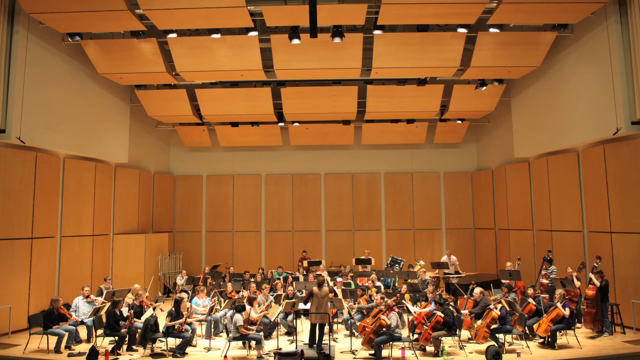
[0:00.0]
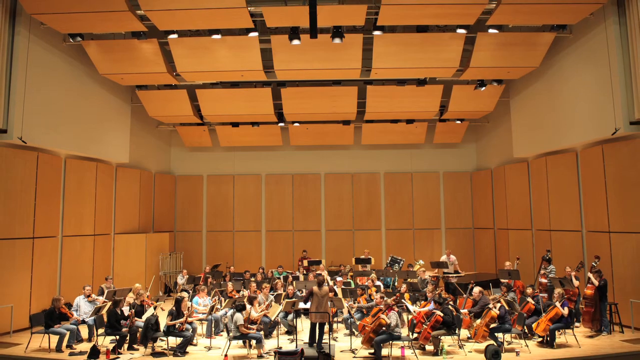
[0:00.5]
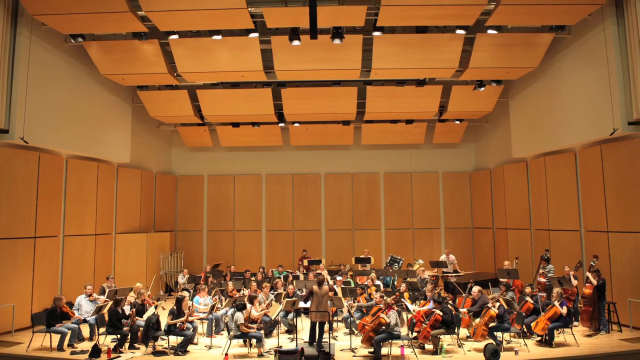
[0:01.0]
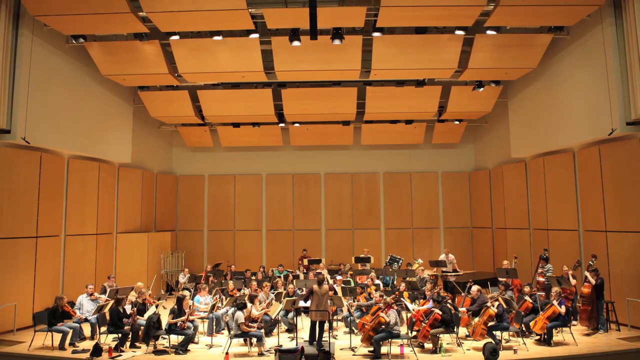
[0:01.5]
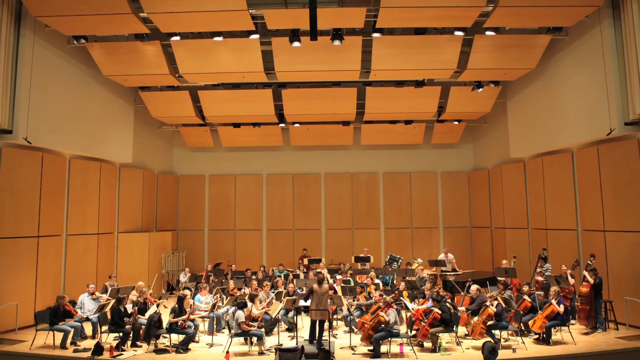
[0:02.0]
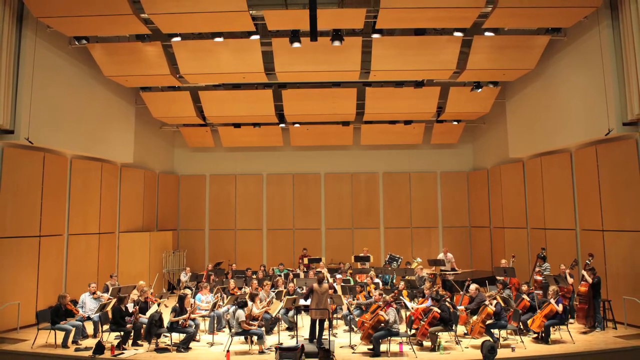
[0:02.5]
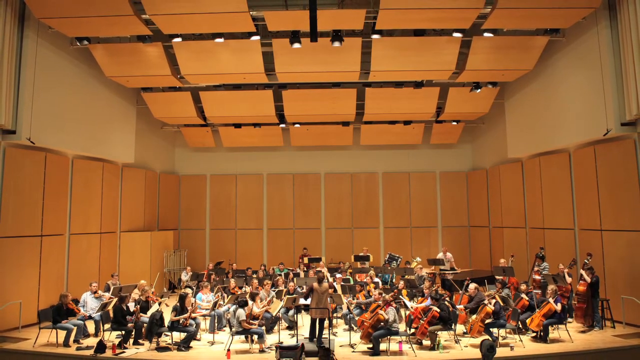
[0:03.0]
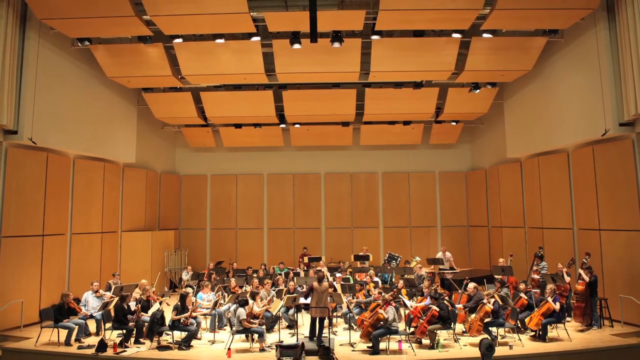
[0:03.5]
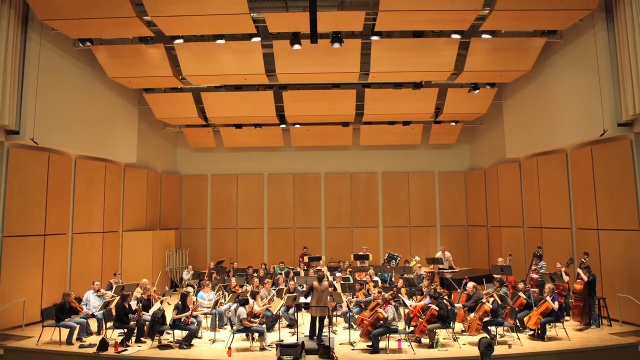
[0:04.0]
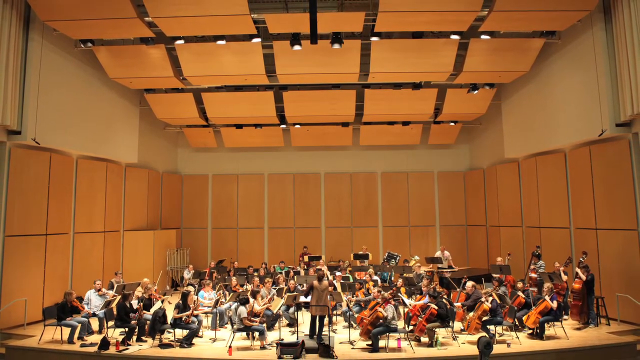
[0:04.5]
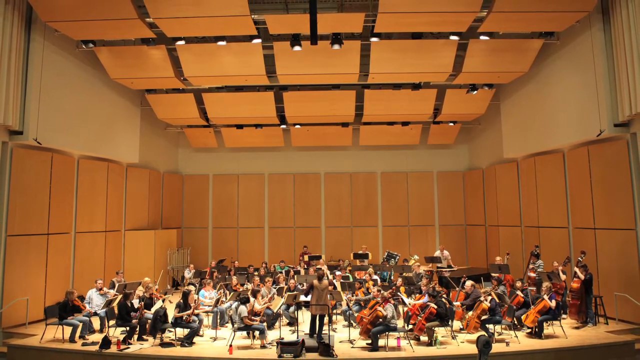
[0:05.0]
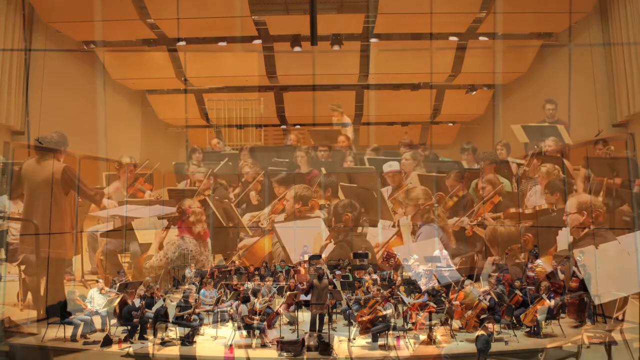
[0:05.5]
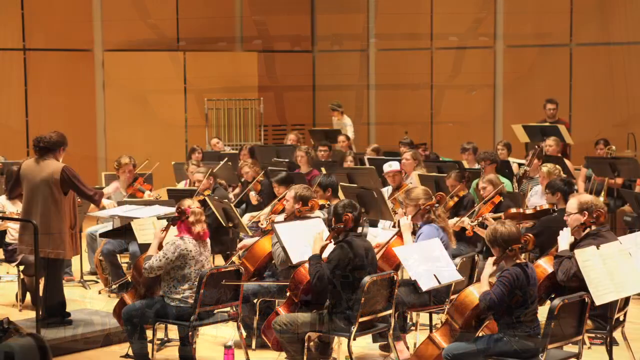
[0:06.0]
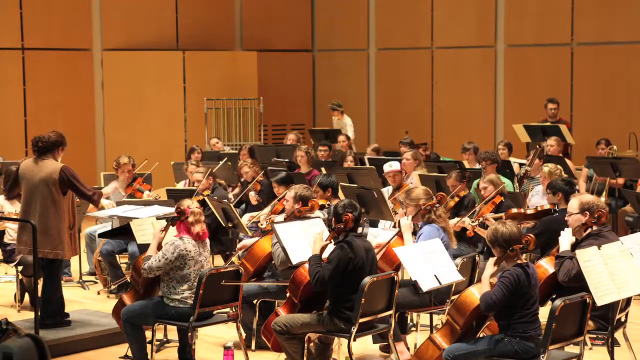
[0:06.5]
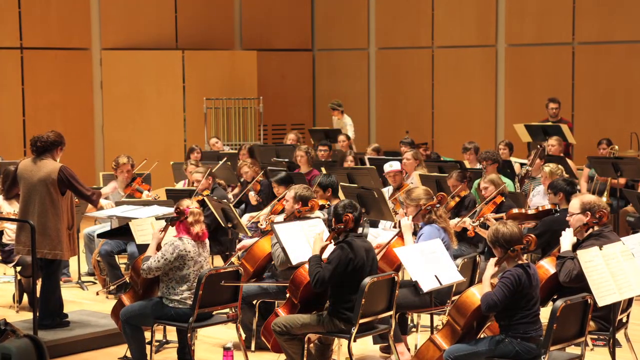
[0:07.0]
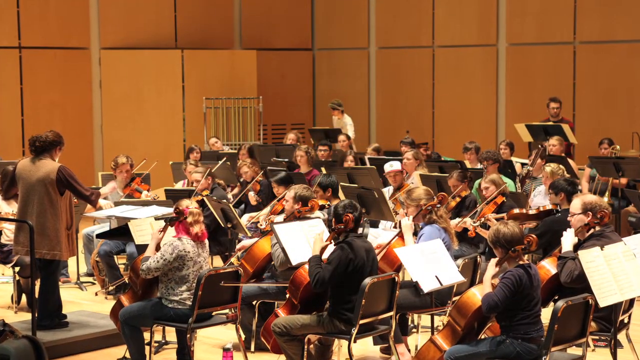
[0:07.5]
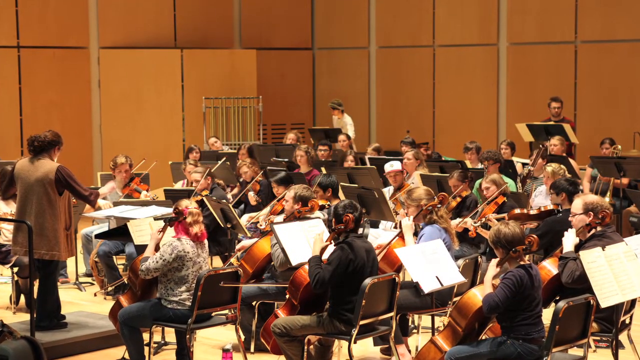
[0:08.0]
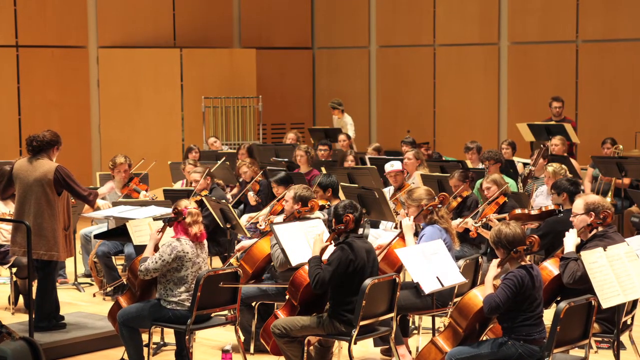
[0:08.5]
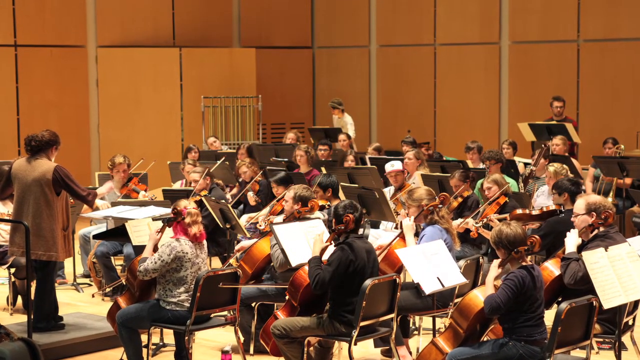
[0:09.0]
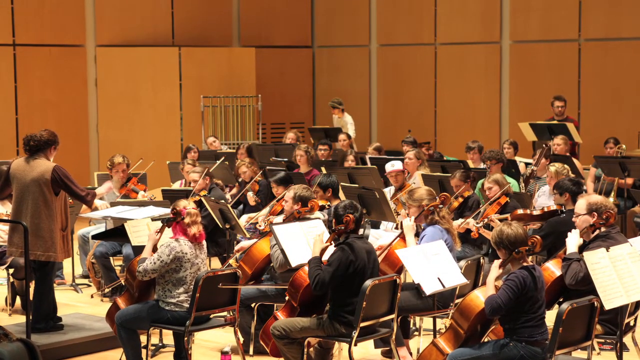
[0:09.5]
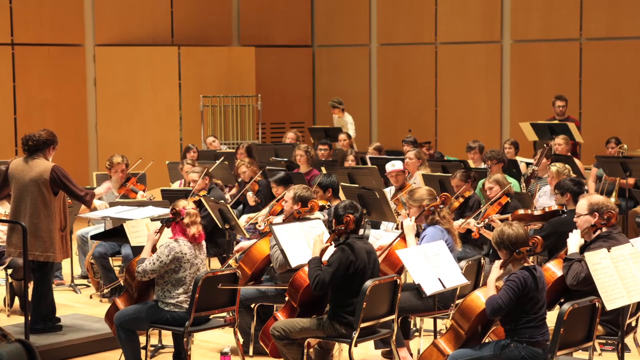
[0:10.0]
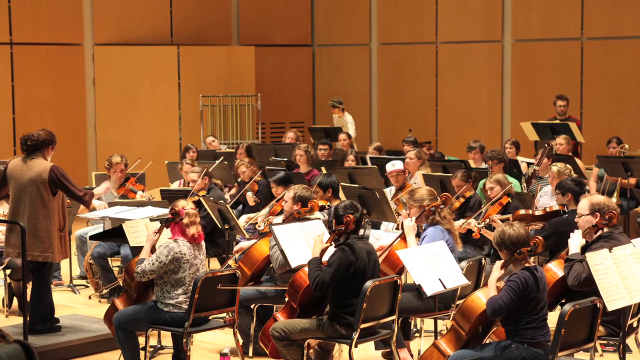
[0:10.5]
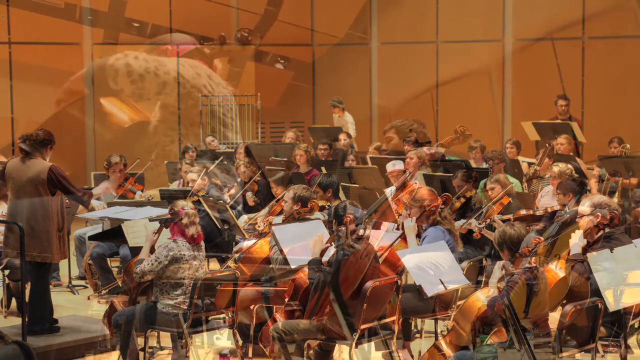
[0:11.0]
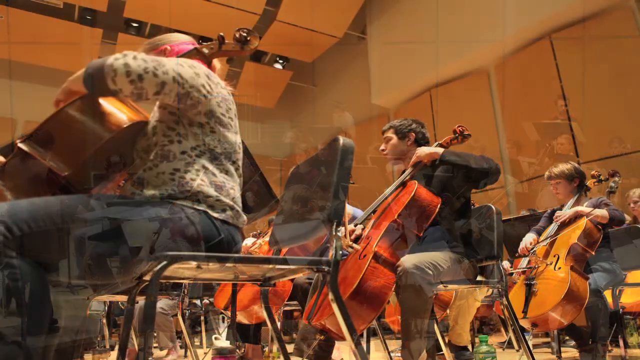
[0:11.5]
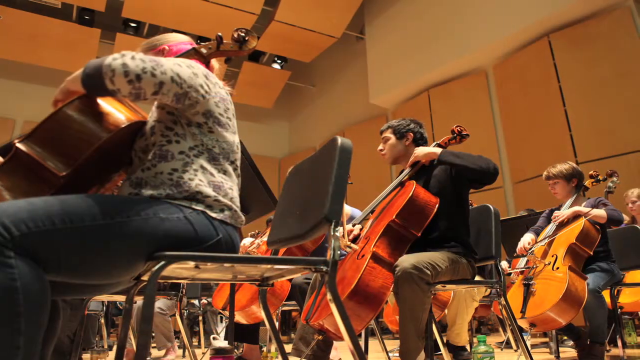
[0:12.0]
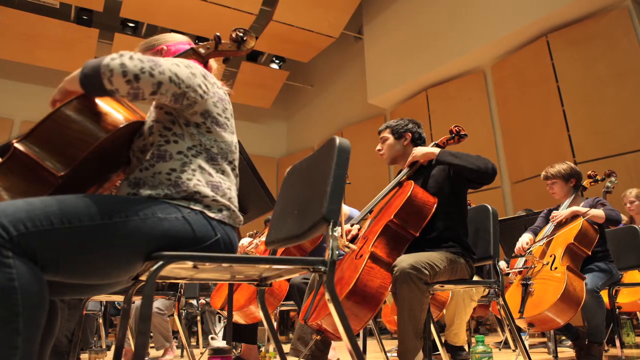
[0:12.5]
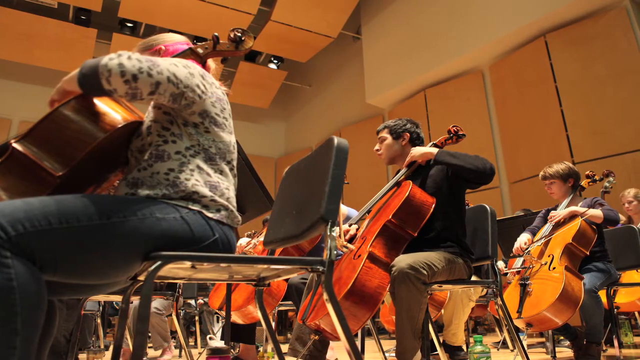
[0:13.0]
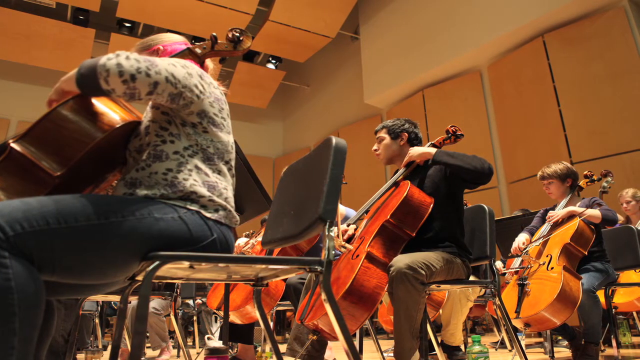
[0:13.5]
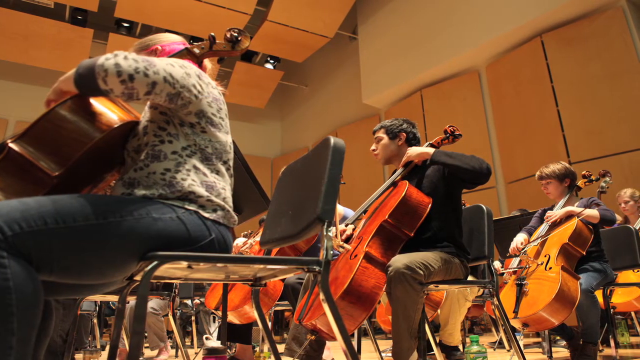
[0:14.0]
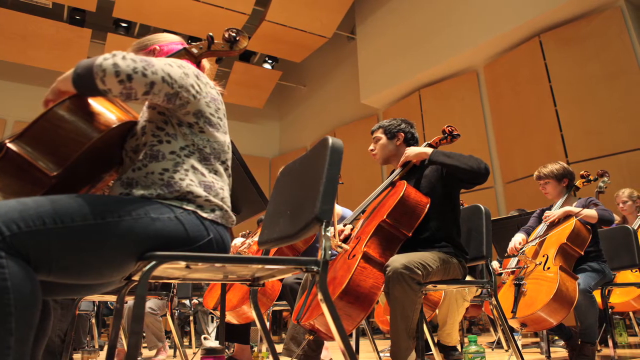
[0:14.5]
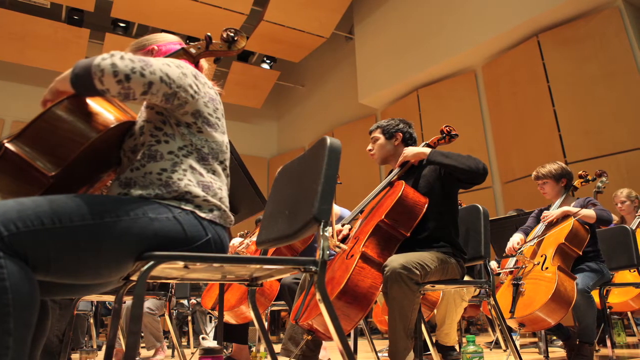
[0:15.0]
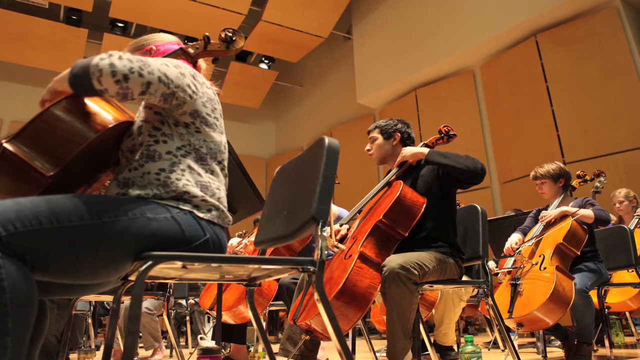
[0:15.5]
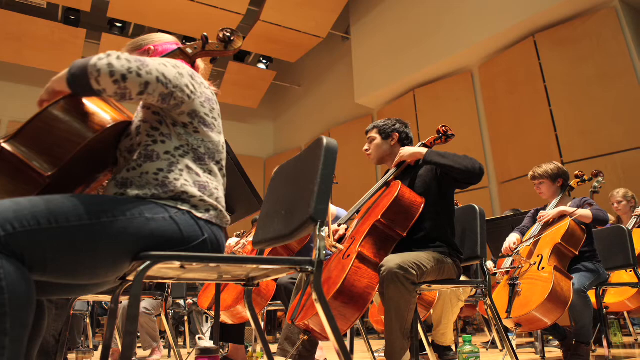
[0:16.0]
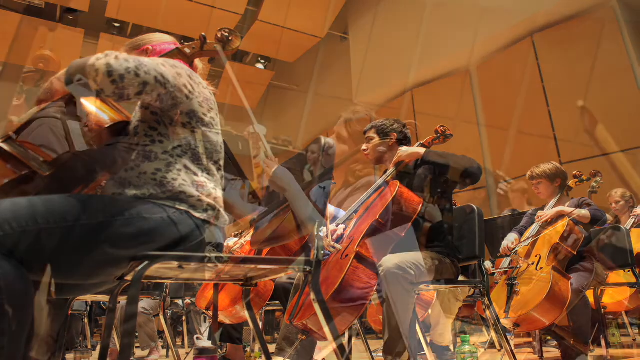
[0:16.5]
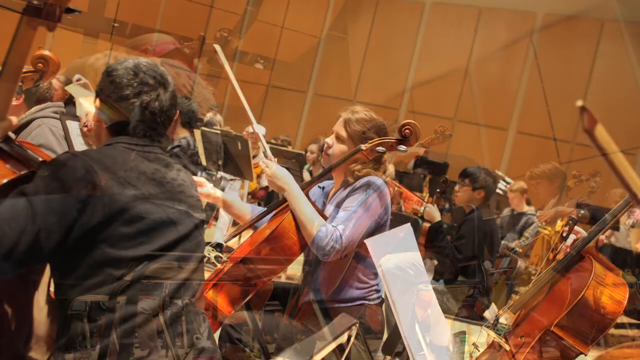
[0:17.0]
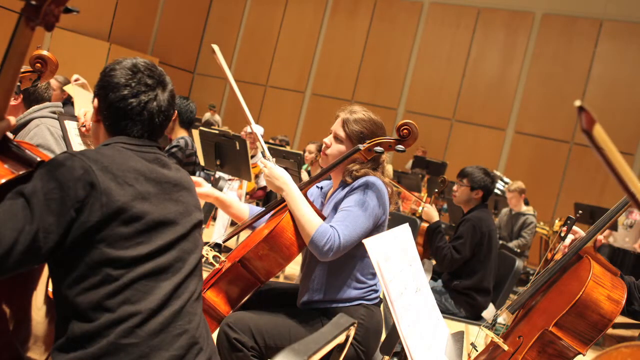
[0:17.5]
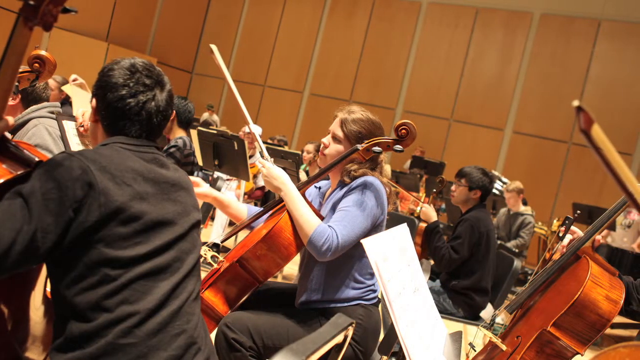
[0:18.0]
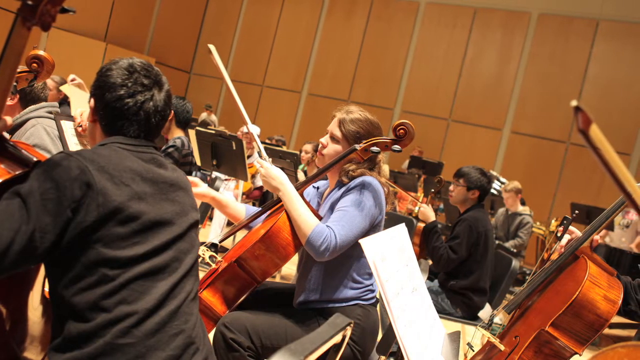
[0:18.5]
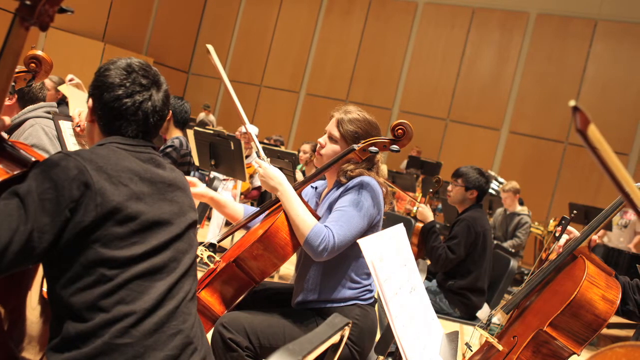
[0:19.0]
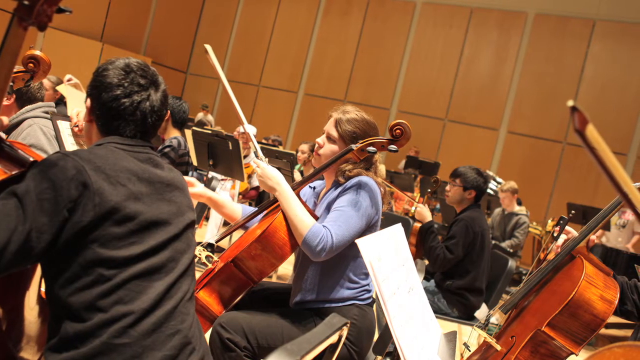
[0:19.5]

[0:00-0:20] Still images show an orchestra playing in an orchestra hall with a distinctive ceiling and walls. It is a large group of dozens of players, mainly on stringed instruments; in the back there appear to be some percussion instruments and possibly a couple of brass instruments, and a few horns are scattered in the back. All of the instruments in the front are stringed: different types of bass, cellos and violins. The room is large and unusually designed, with large panels hanging from the ceiling and walls made of large panels as well.